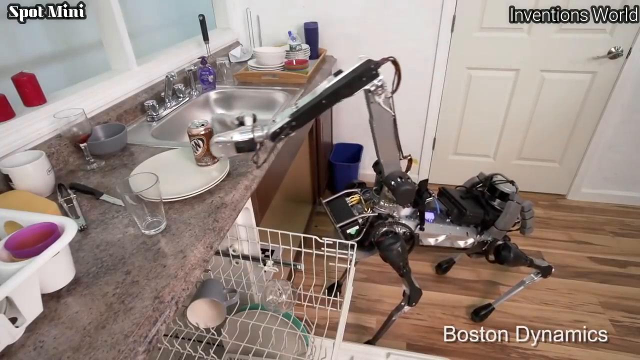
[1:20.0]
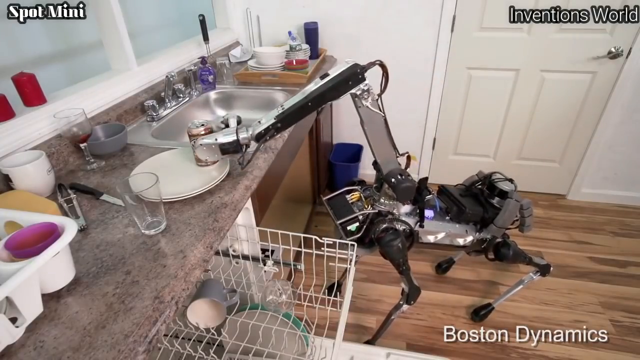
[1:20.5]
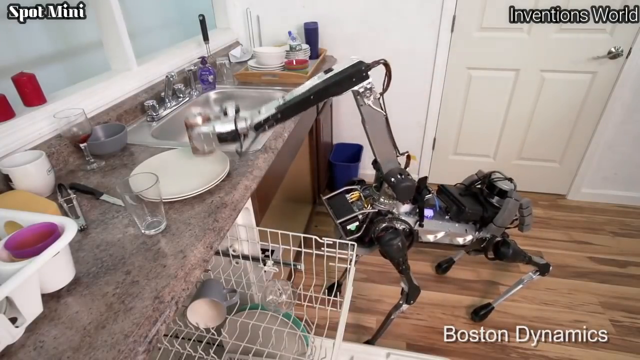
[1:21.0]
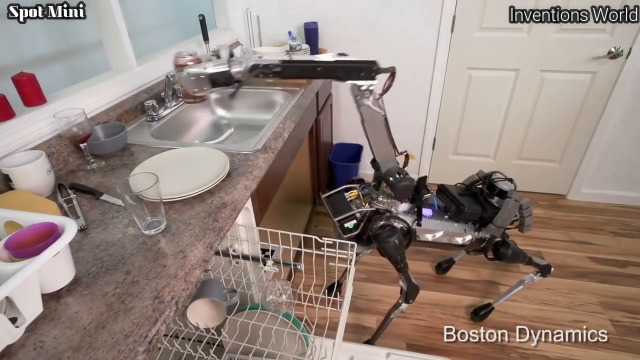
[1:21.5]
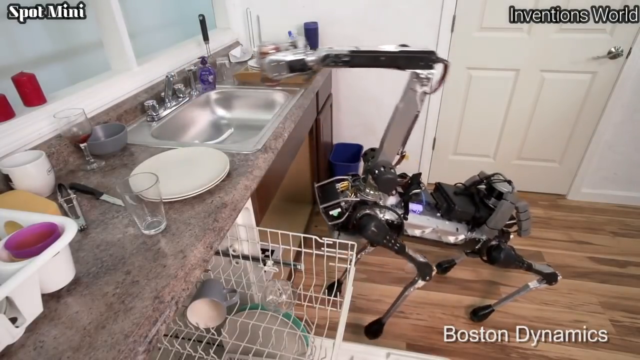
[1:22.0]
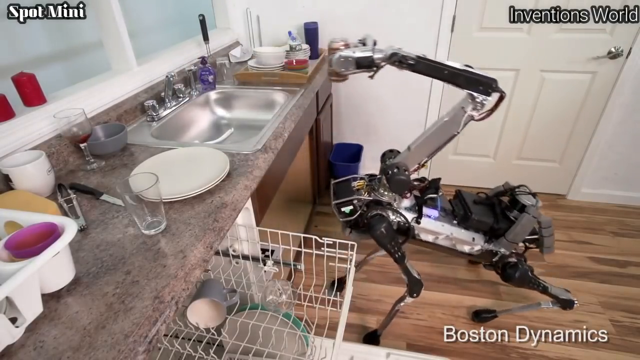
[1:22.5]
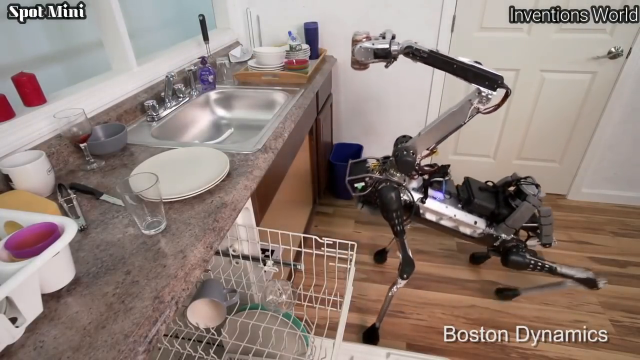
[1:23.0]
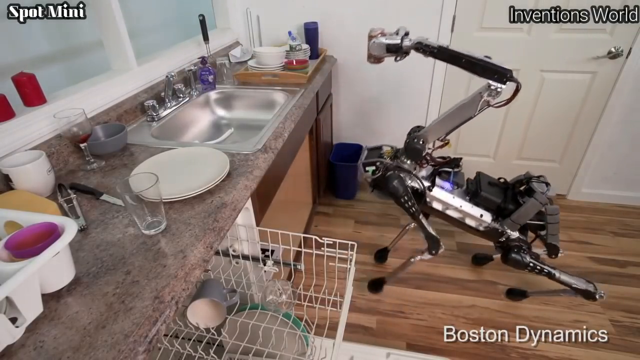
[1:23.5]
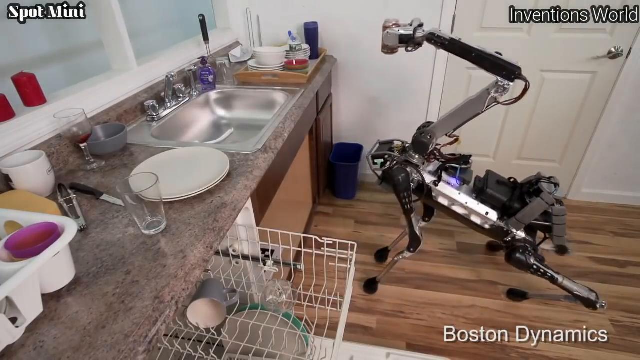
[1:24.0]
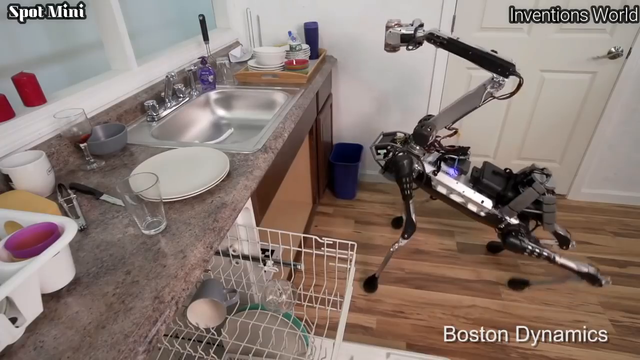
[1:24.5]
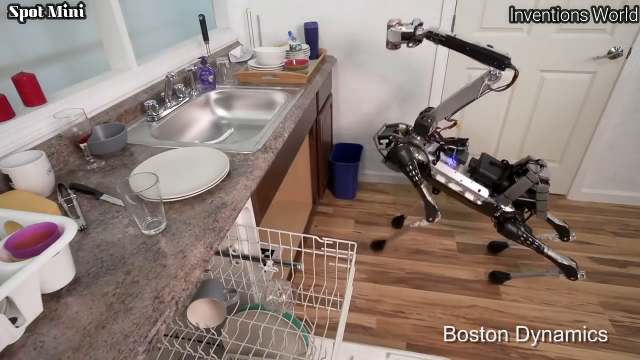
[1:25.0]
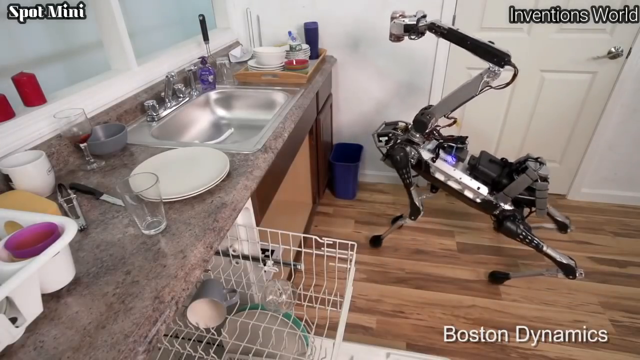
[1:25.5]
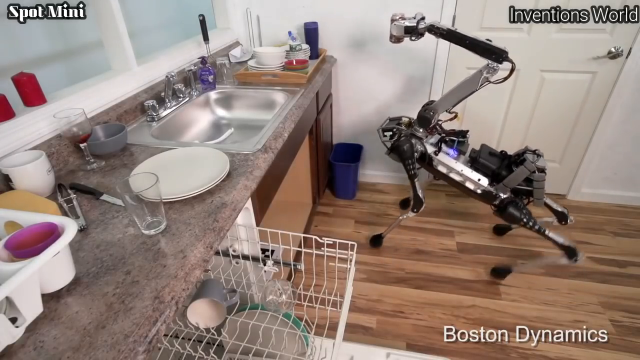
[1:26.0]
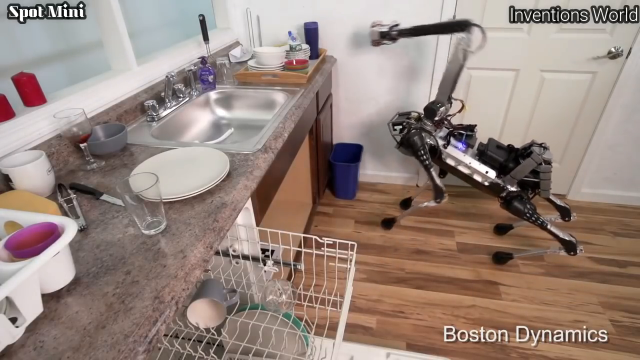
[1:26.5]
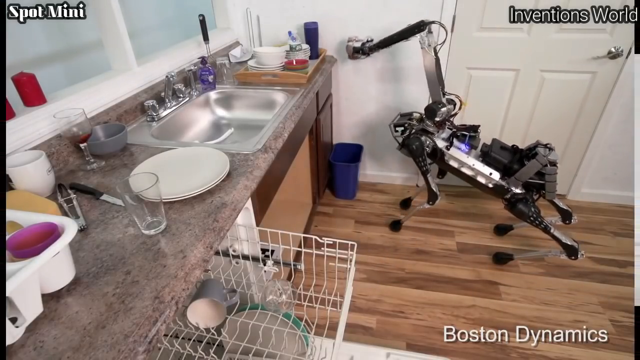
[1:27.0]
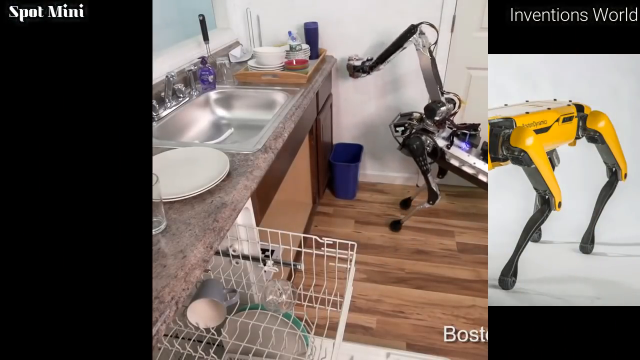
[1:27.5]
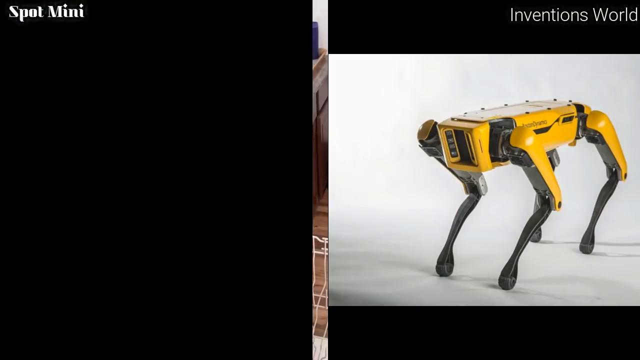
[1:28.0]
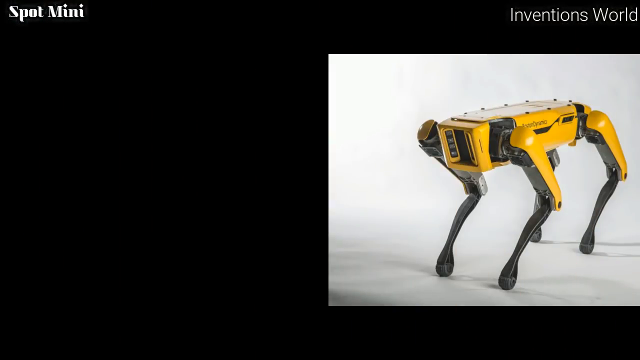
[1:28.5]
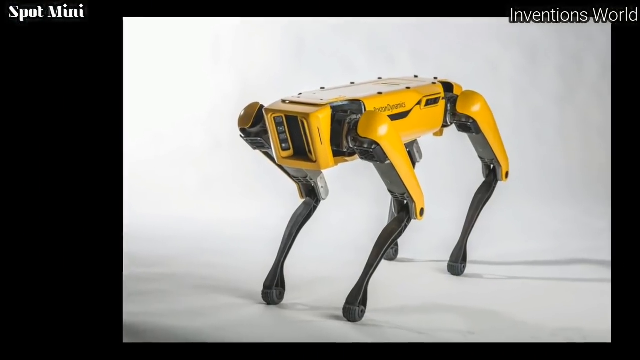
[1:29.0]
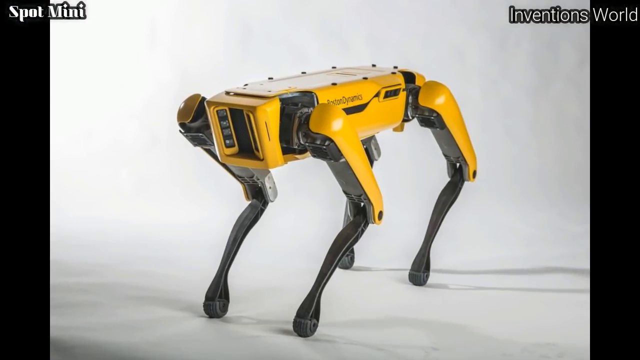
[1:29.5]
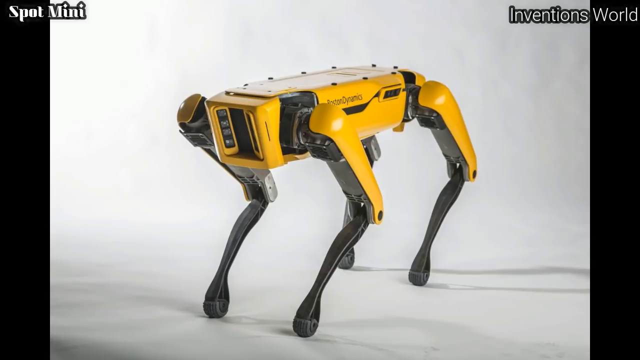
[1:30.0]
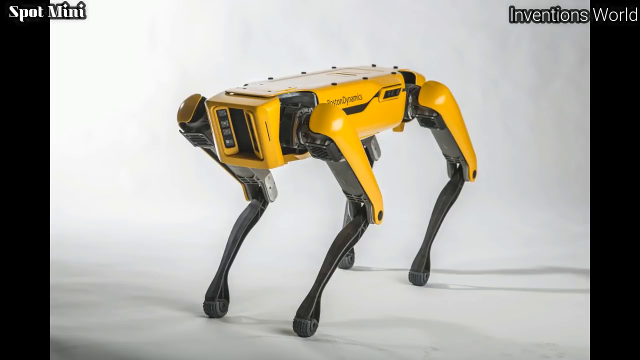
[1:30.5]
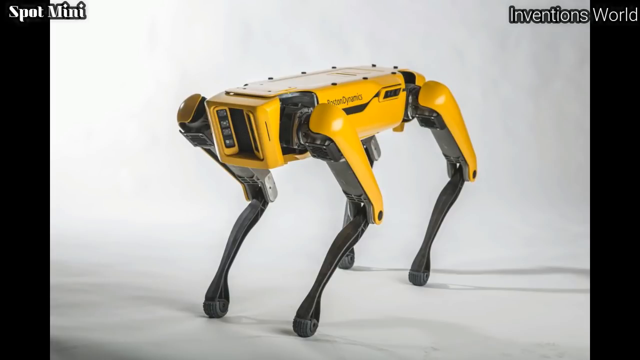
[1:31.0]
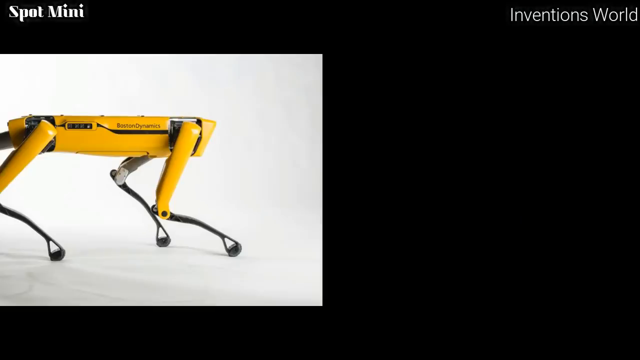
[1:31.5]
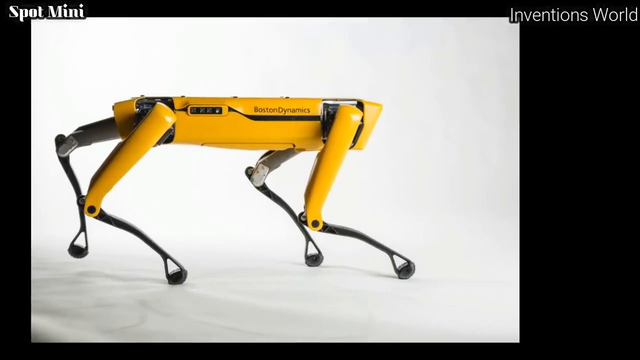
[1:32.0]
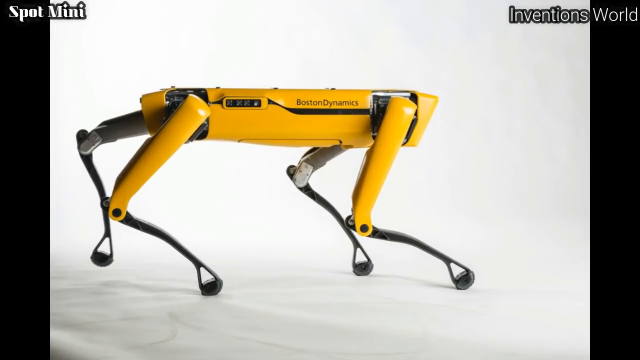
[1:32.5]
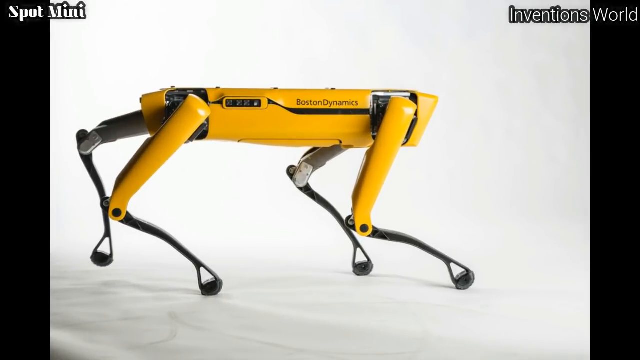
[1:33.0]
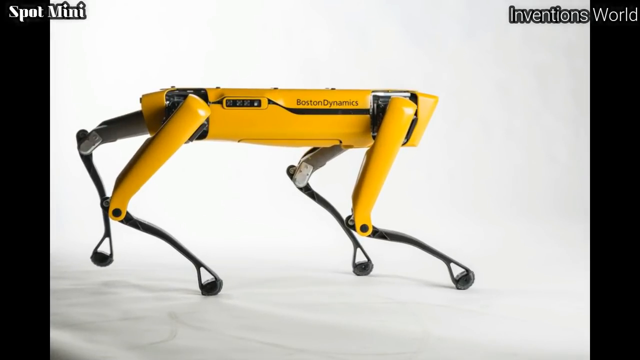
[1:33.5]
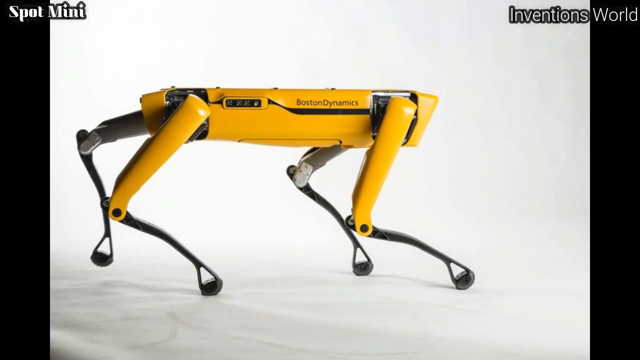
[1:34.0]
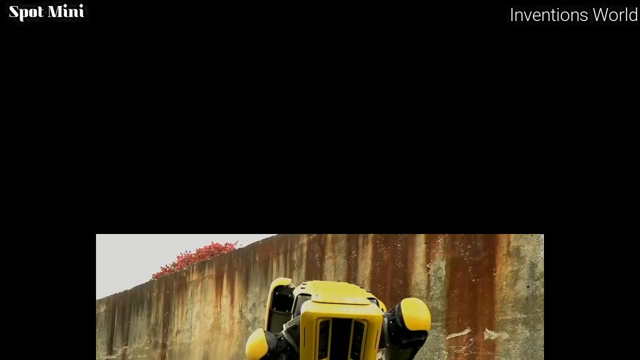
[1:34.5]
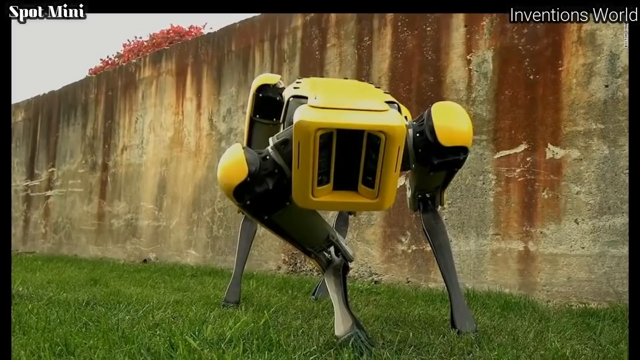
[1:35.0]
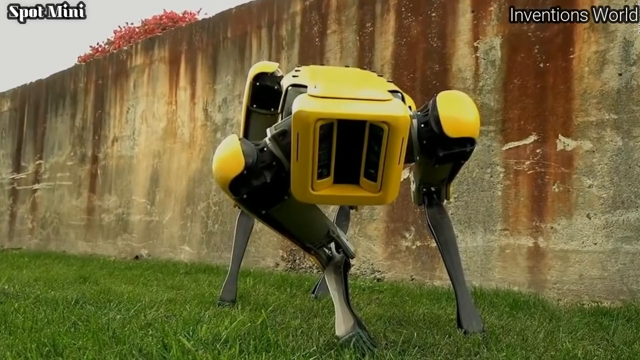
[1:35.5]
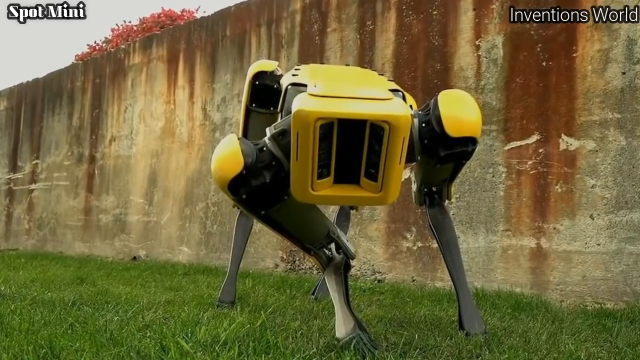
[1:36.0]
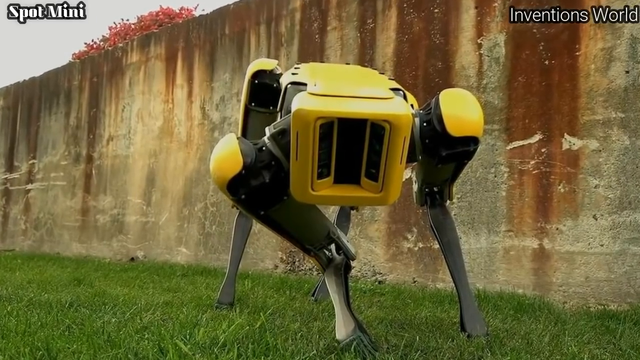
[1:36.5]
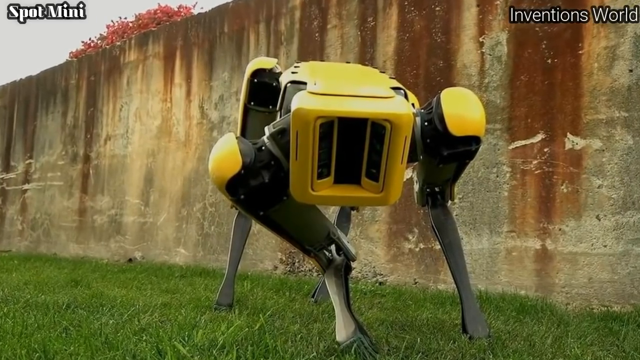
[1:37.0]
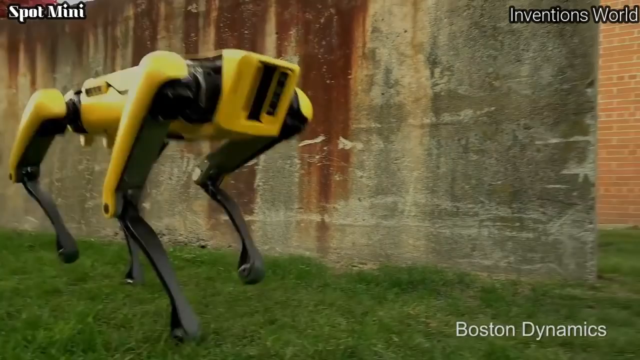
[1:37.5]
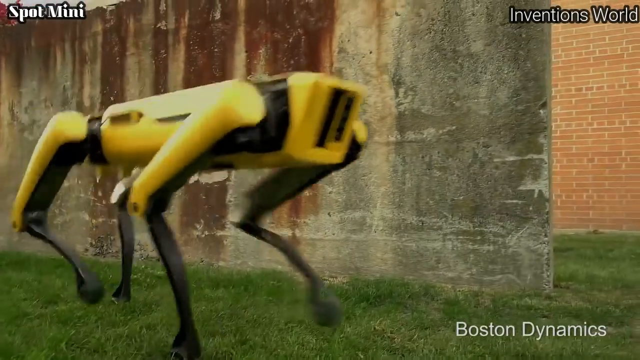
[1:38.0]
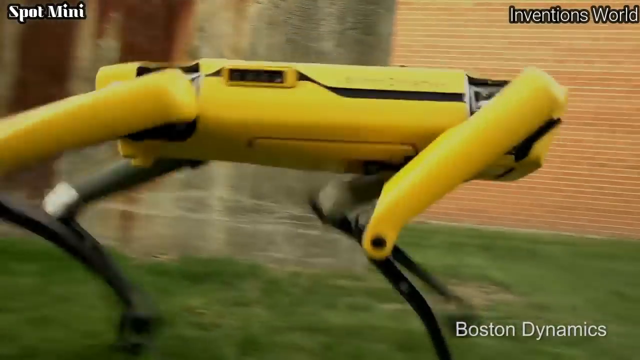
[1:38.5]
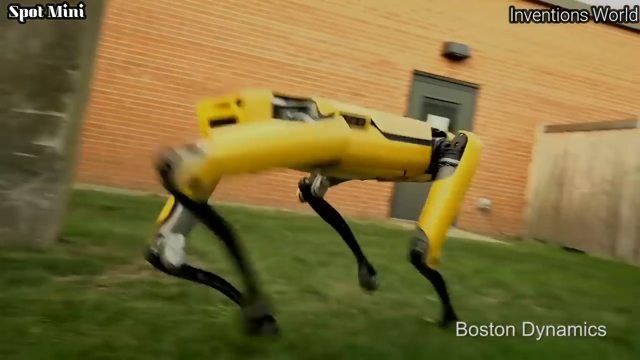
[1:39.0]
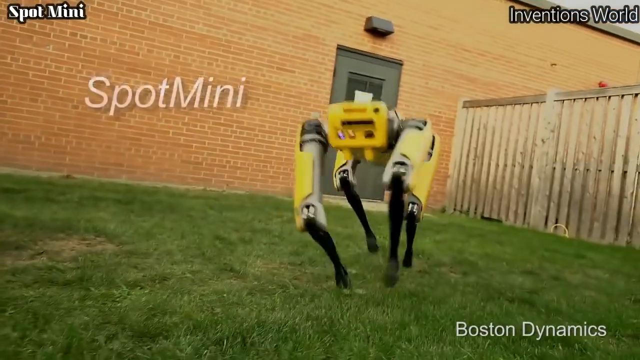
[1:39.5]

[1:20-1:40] The snake-headed robot picks up a can, moves it to a little blue trash can, and drops it in. Pictures show the yellow headless dog-looking robot from the left side and from the right side, and then the video returns to the earlier shot of the yellow robot walking across the grass toward a brick building. It then moves back to the silver robot. "Boston Dynamics" is written on the side of the yellow robot, harder to see in the outdoor footage but clear in the straightforward images. Nothing appears to be written on the silver robot.